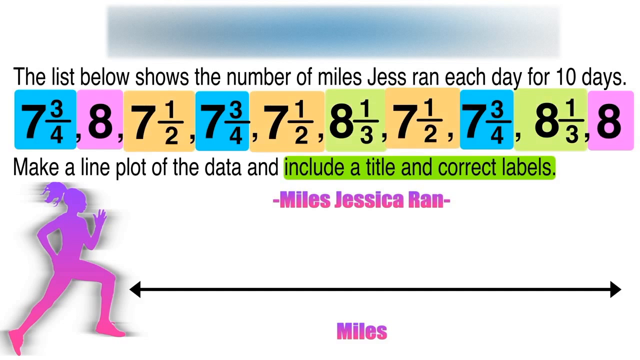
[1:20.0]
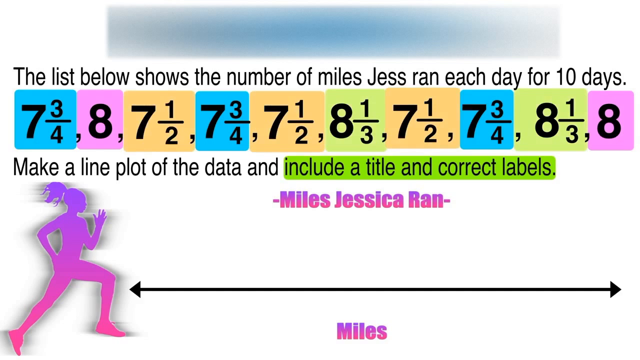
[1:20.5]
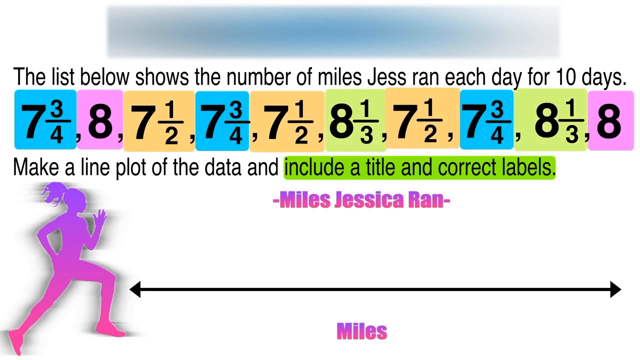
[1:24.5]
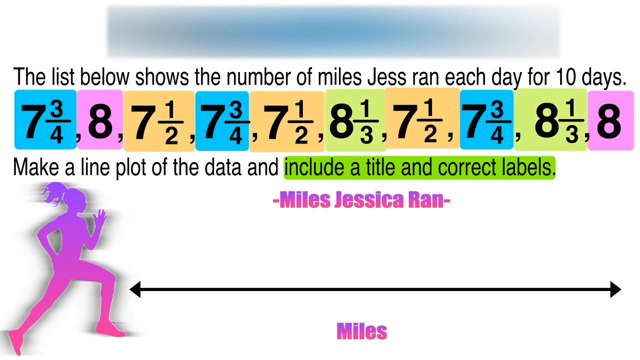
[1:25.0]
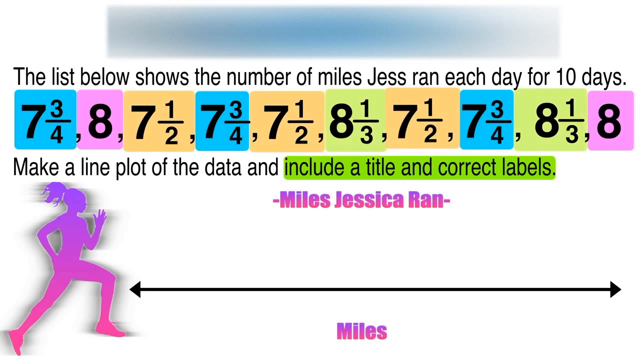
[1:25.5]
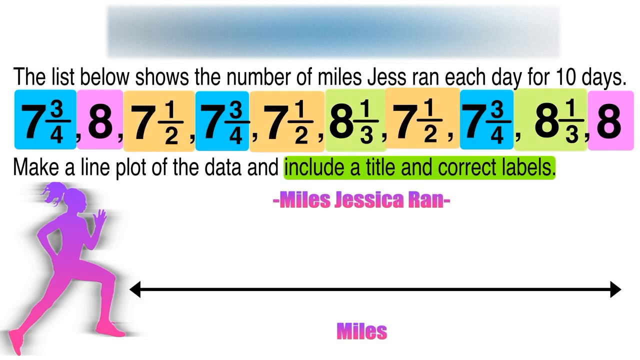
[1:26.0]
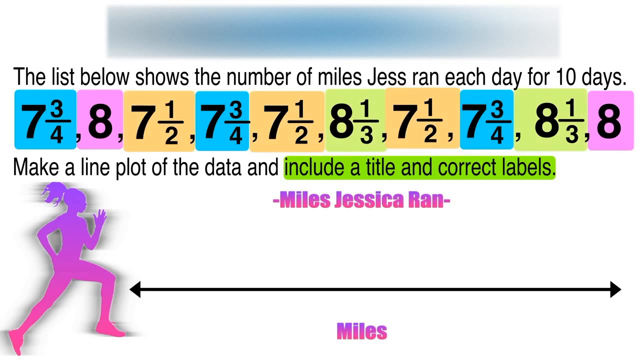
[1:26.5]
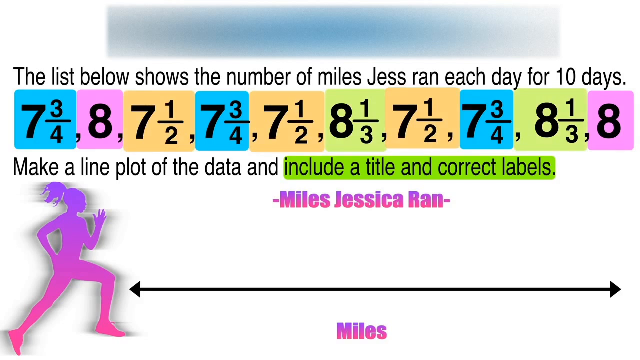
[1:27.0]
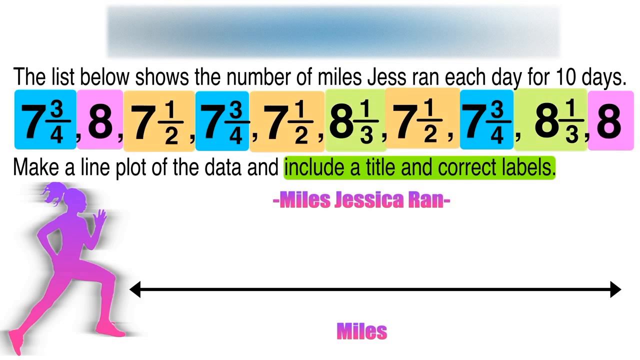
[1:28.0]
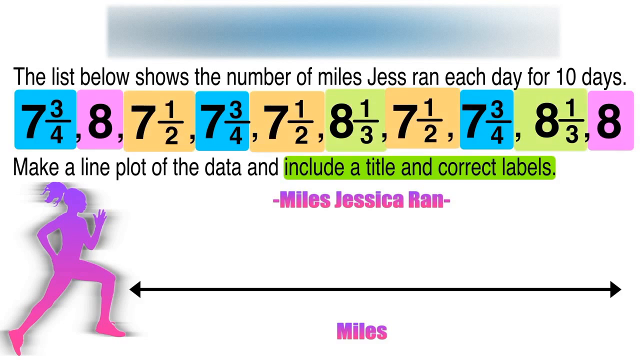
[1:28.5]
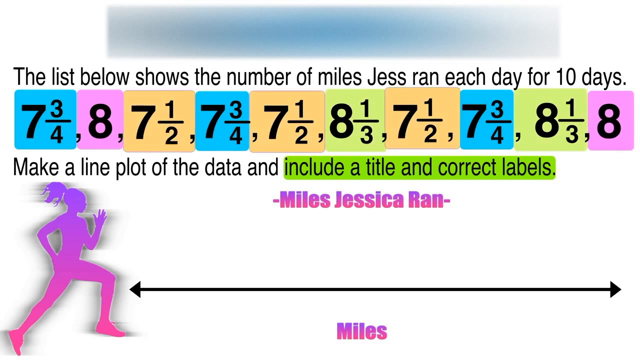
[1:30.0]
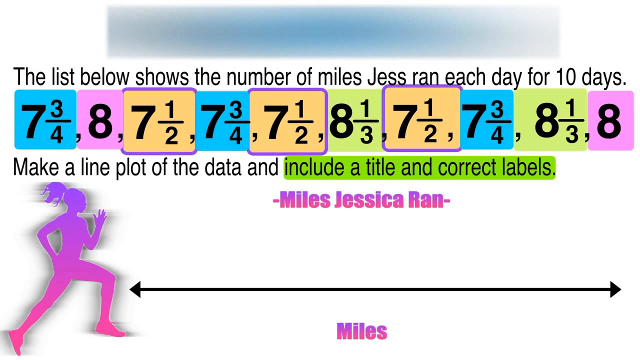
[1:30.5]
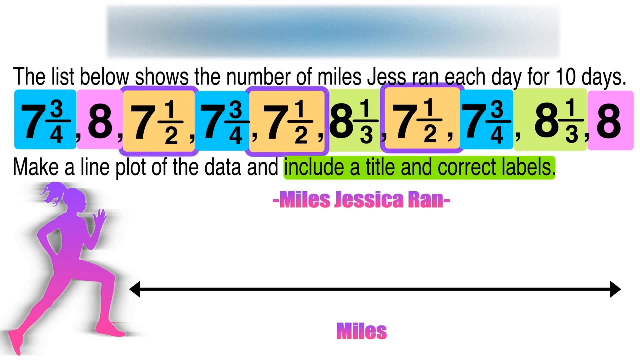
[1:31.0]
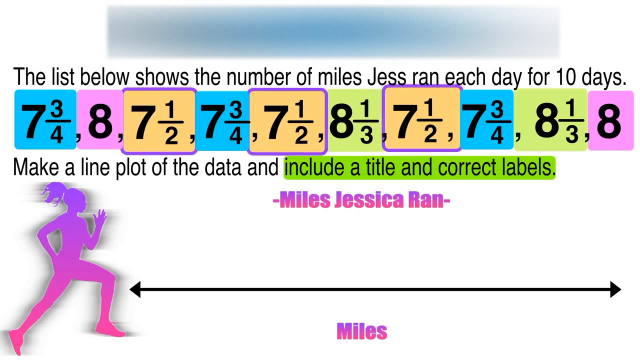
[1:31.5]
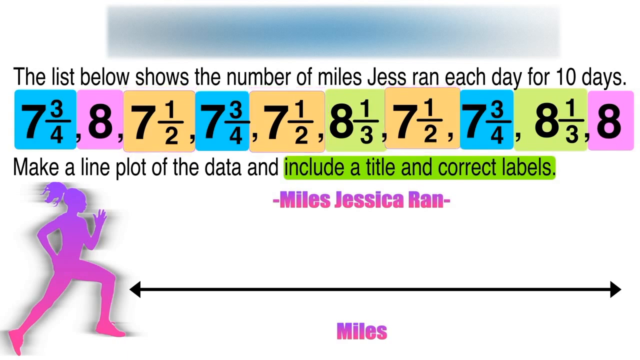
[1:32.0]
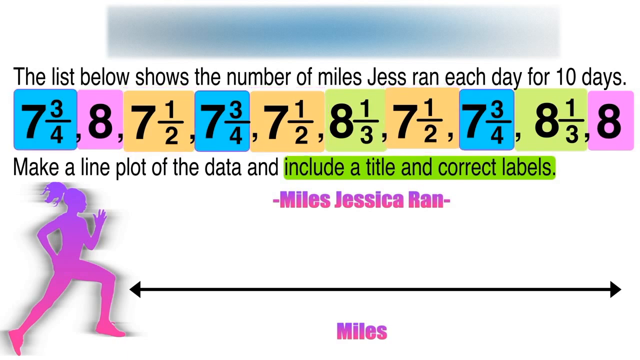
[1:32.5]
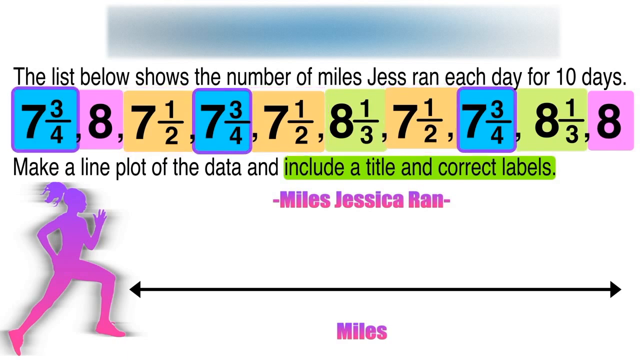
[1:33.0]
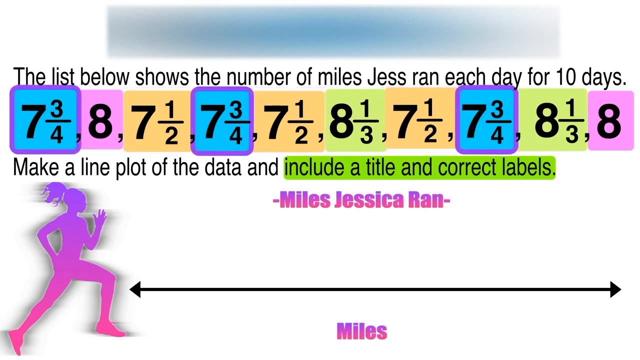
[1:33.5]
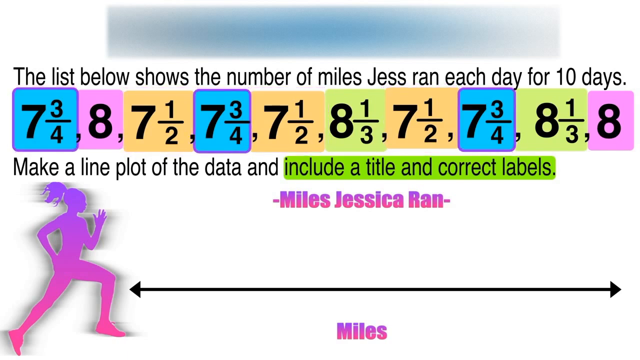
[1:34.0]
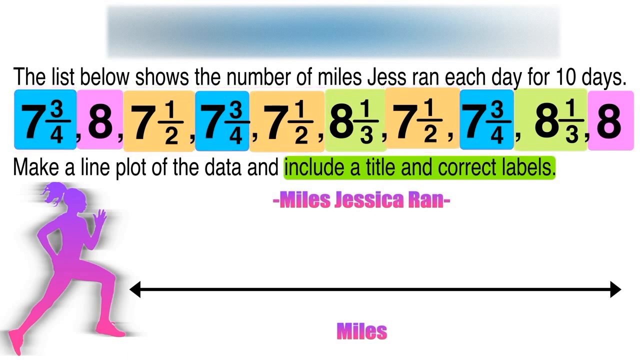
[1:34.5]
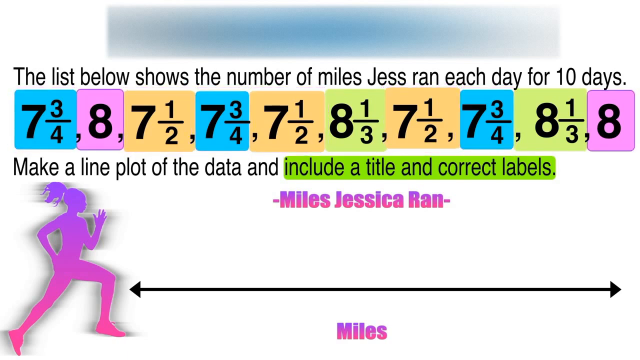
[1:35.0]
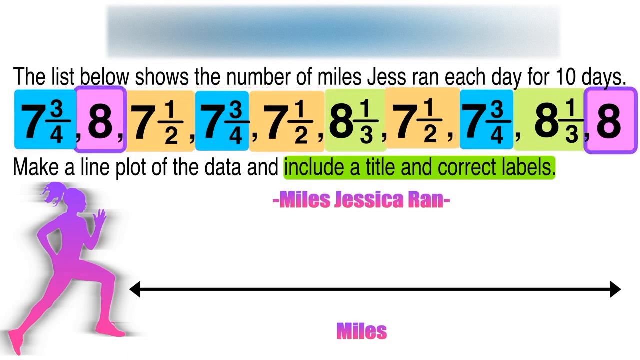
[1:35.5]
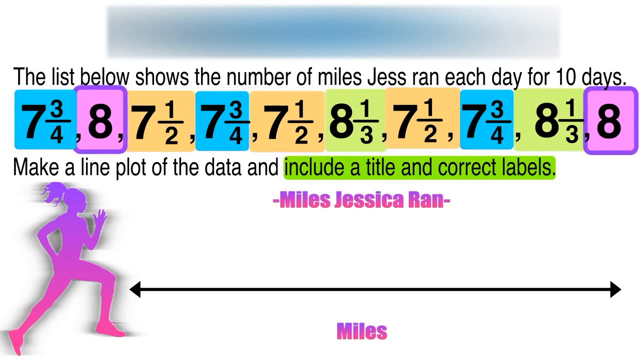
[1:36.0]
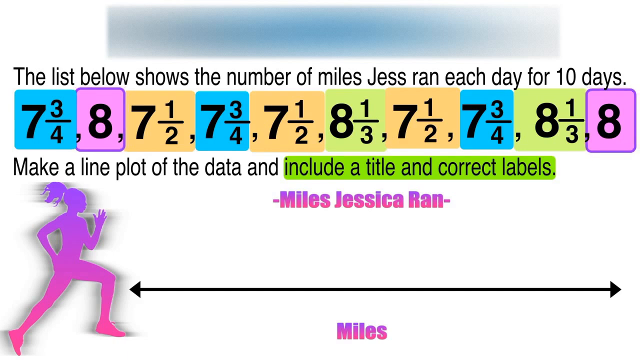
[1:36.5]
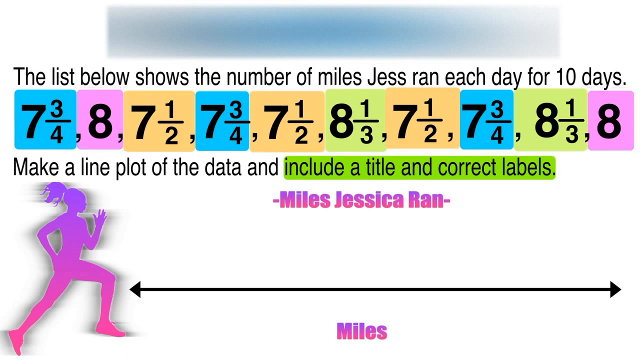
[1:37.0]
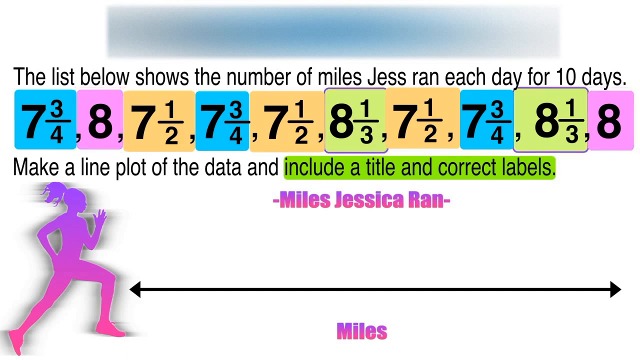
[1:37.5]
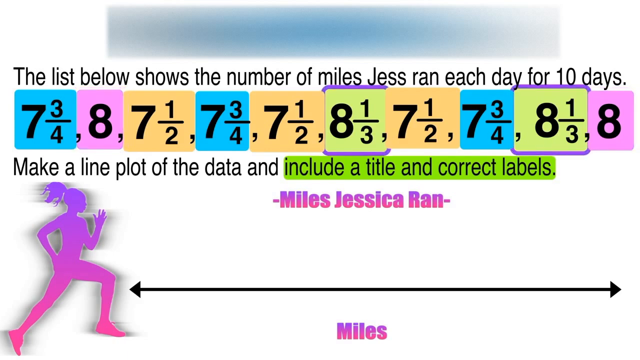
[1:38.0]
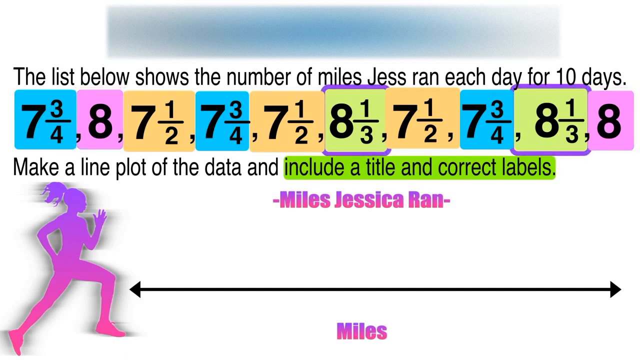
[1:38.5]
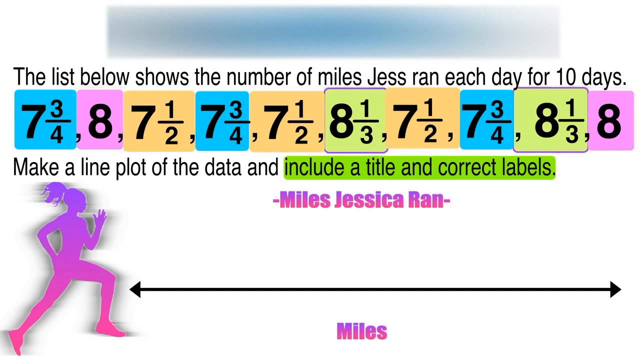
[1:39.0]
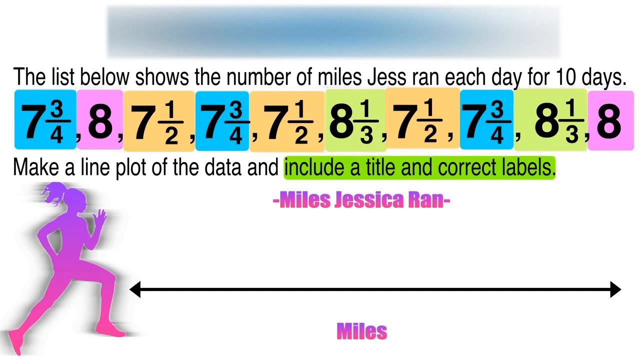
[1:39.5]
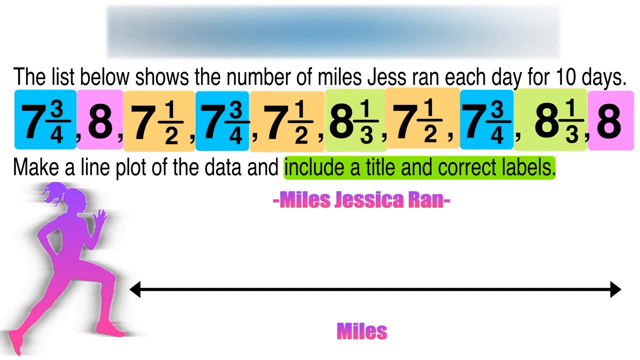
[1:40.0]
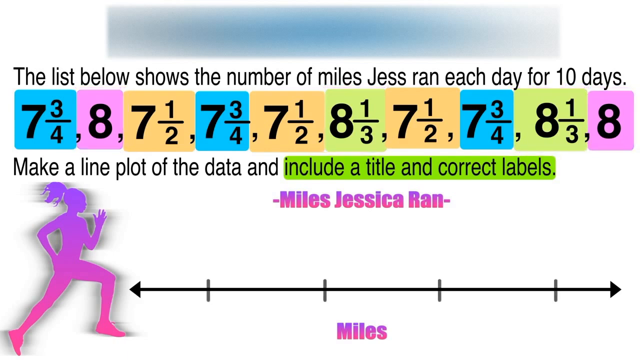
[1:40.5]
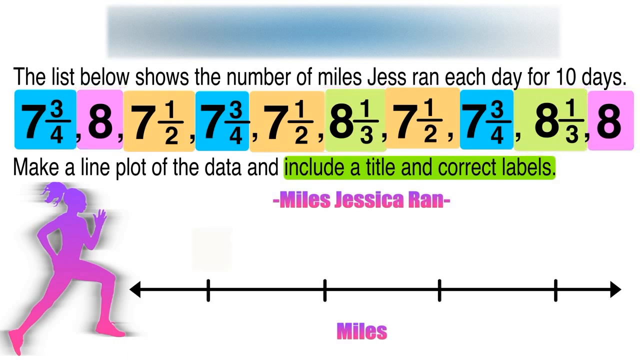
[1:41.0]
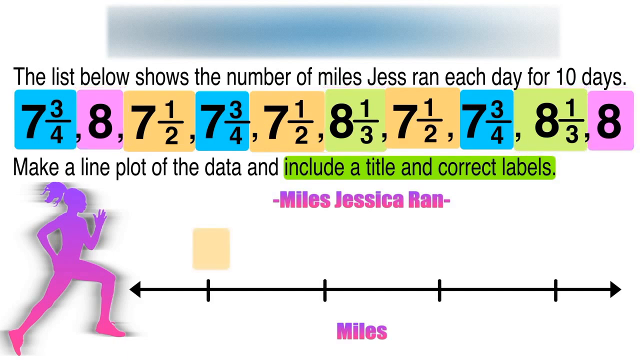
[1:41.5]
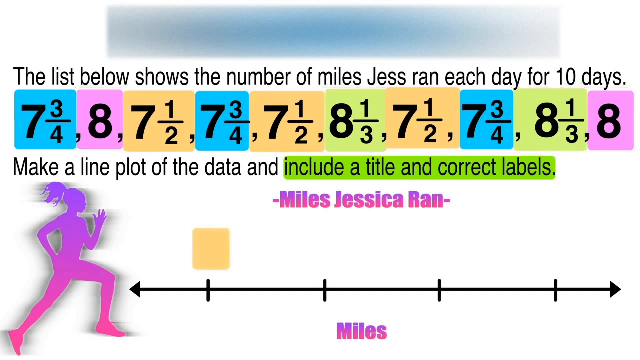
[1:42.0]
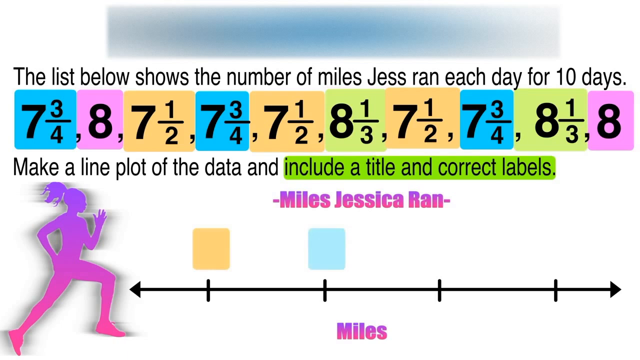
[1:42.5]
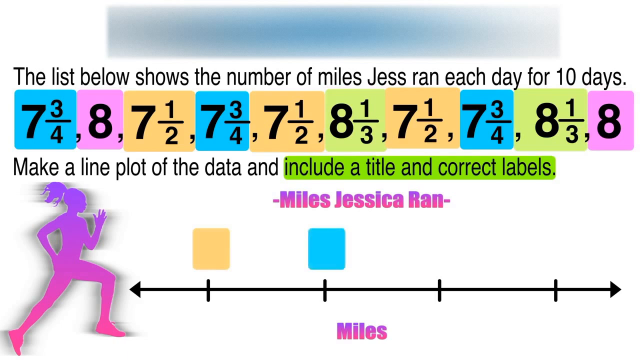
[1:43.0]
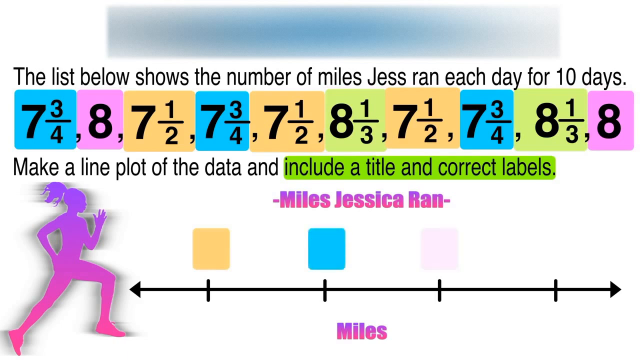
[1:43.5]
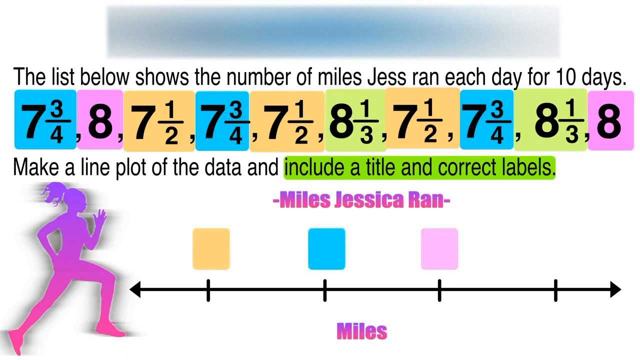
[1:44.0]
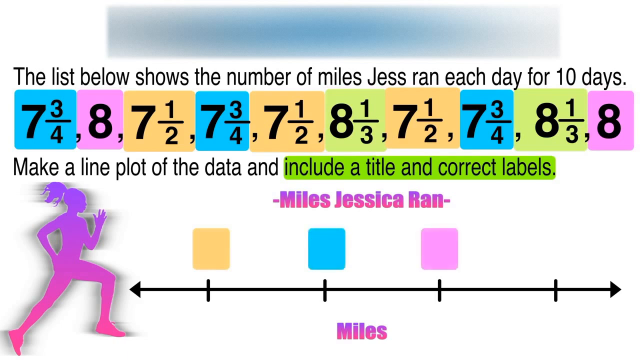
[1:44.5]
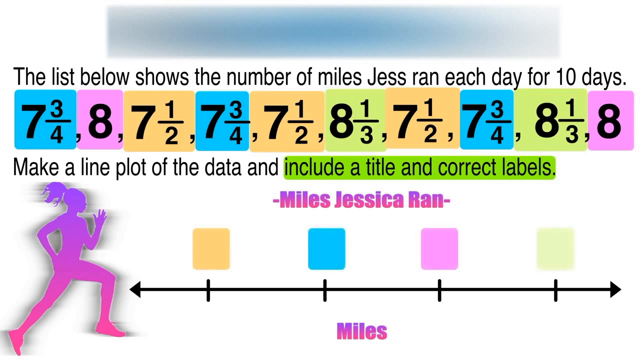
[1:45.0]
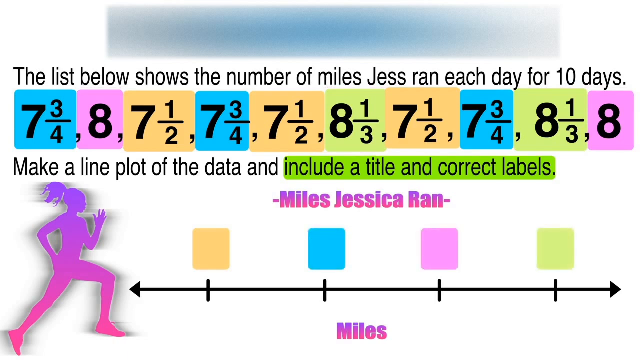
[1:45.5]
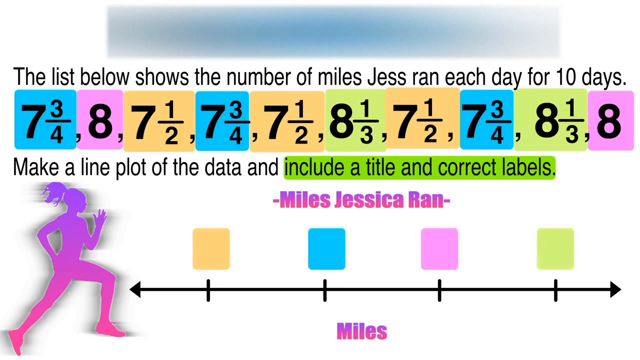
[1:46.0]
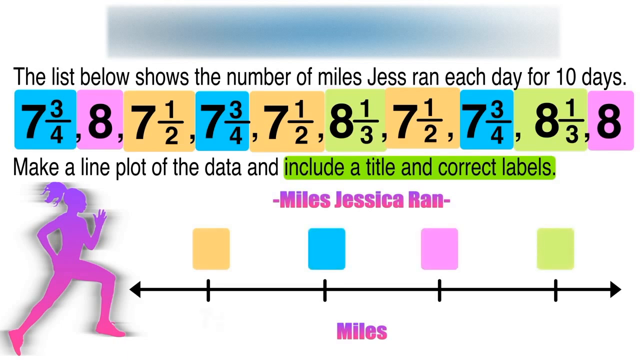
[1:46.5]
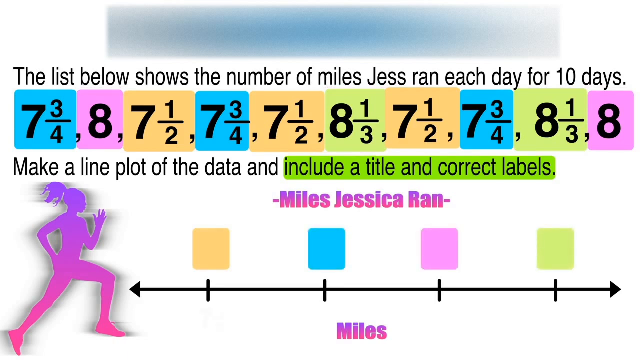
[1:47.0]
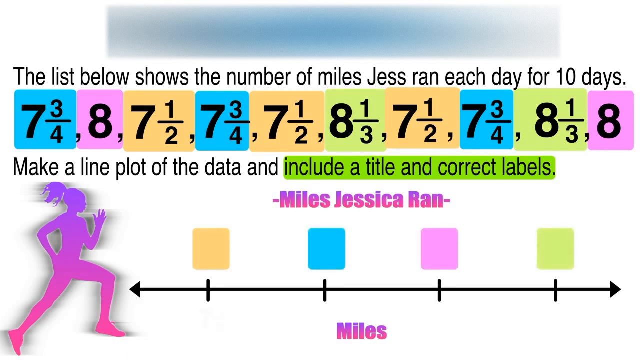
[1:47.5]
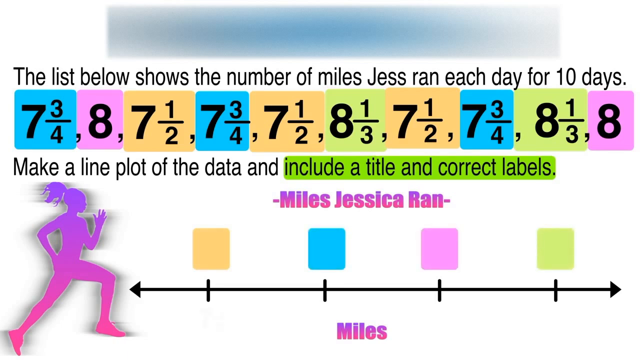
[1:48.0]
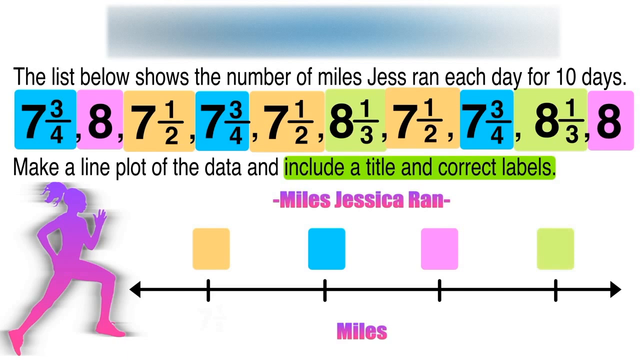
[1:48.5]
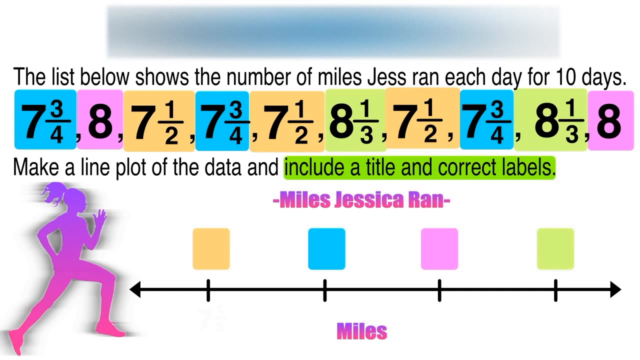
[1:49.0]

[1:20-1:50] The screen stays the same for about 10 seconds. Then the 7 1/2 numbers get a purple outline, followed by the 7 3/4 numbers, then the 8s, and then the 8 1/3s. On the number line, four lines appear, each represented by a color: from the left, orange, blue, pink, and green. These colors correspond to the numbers in the question.